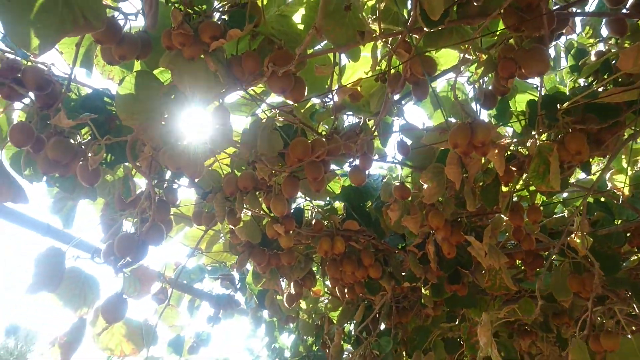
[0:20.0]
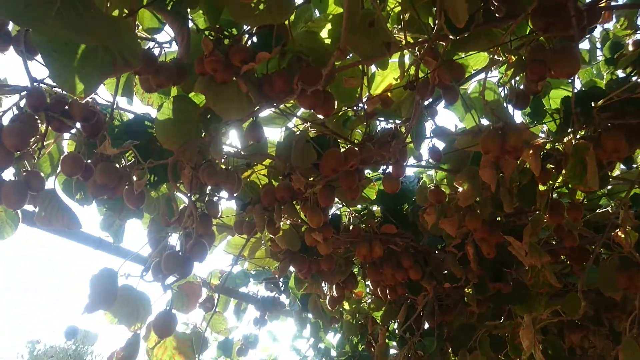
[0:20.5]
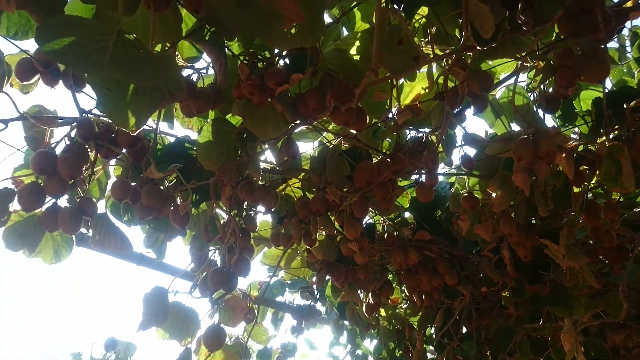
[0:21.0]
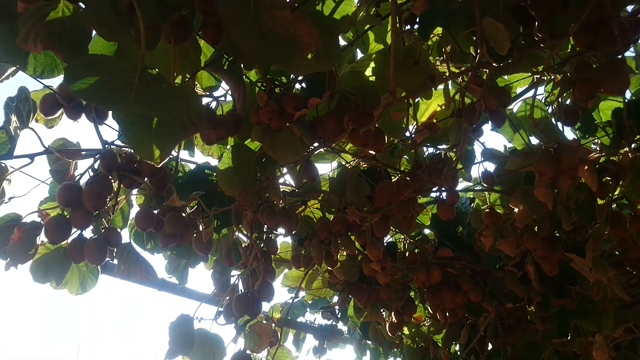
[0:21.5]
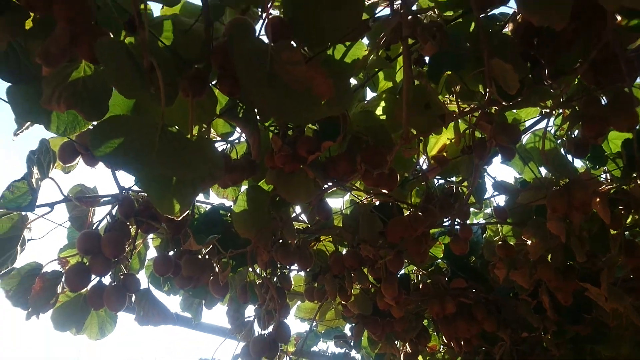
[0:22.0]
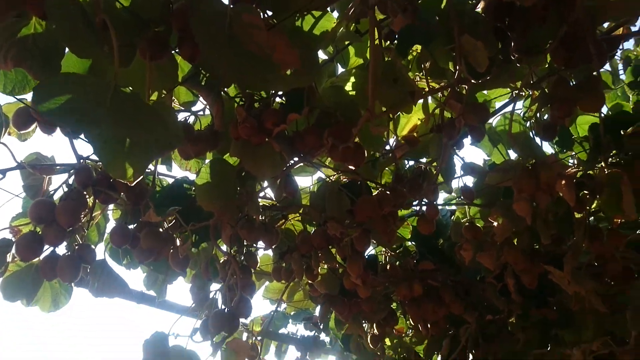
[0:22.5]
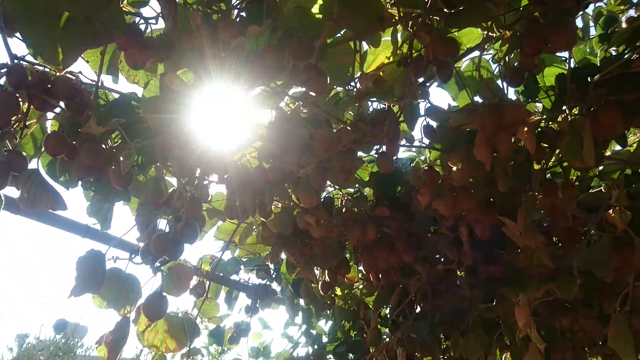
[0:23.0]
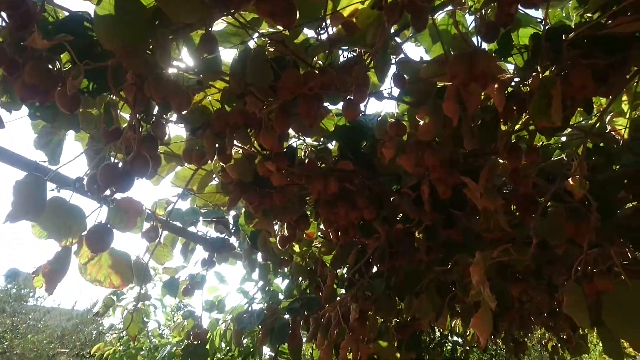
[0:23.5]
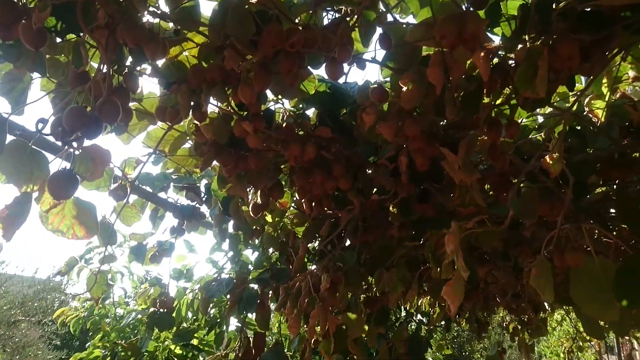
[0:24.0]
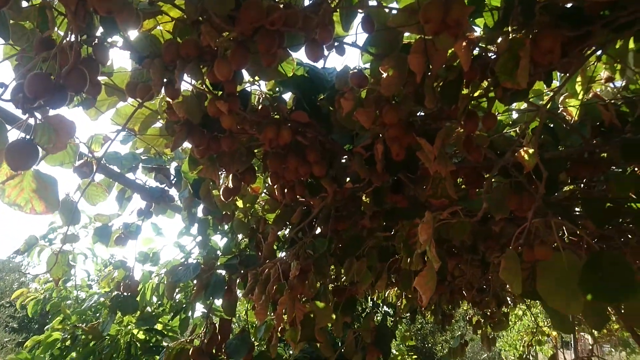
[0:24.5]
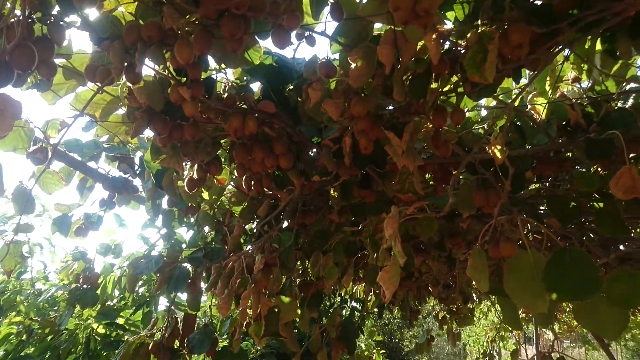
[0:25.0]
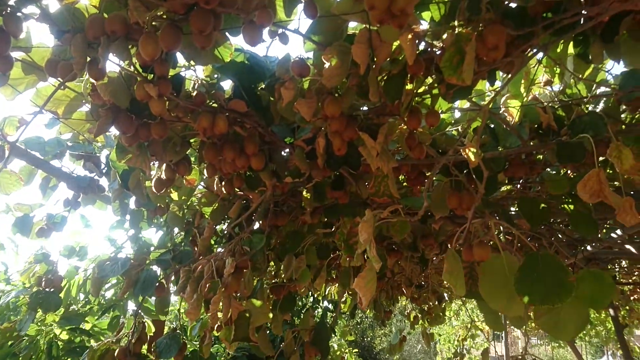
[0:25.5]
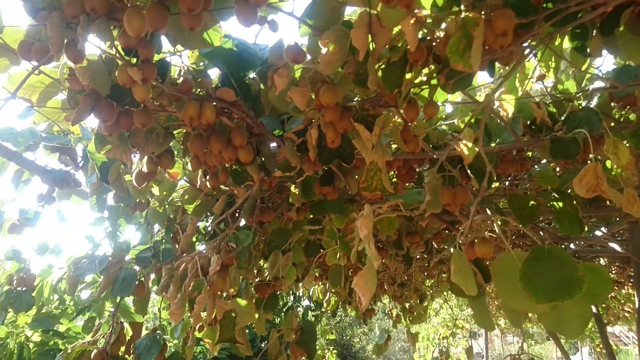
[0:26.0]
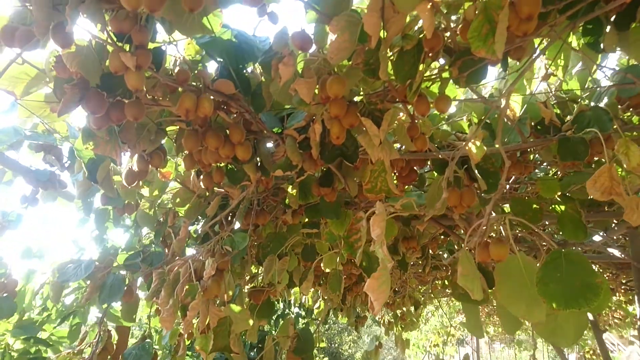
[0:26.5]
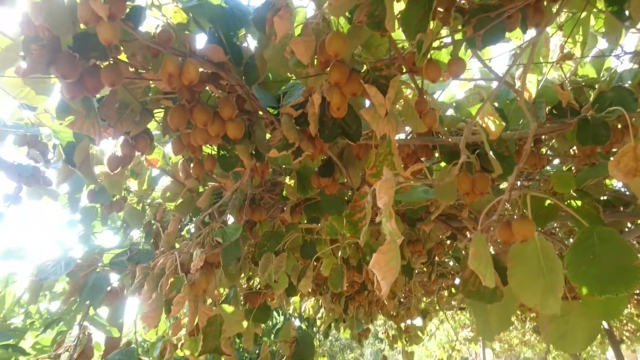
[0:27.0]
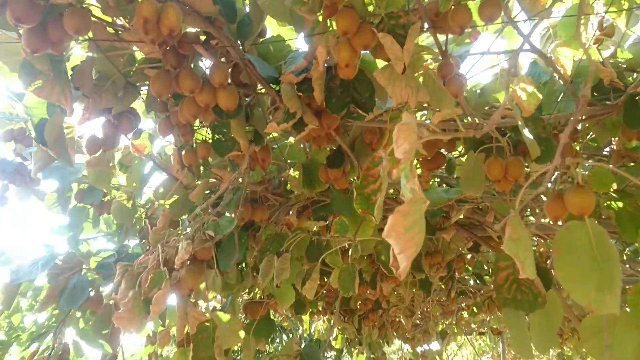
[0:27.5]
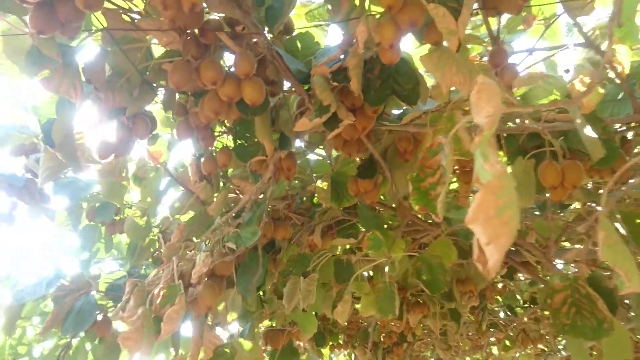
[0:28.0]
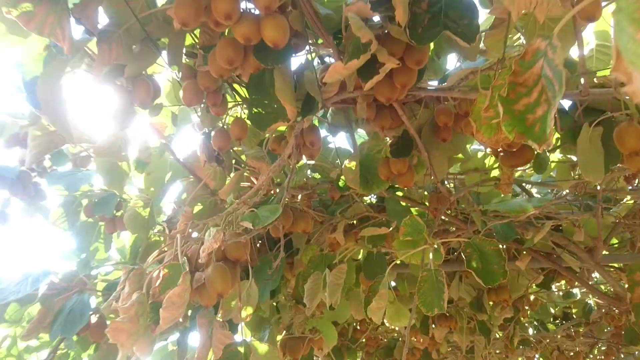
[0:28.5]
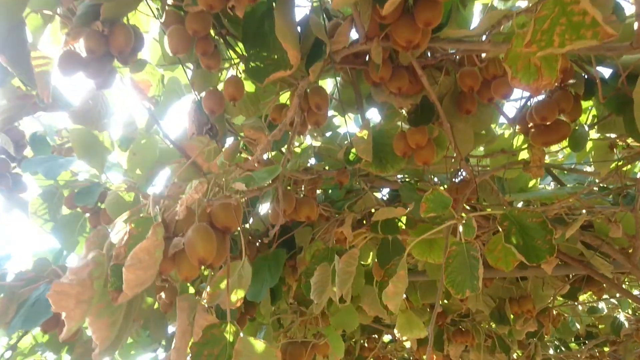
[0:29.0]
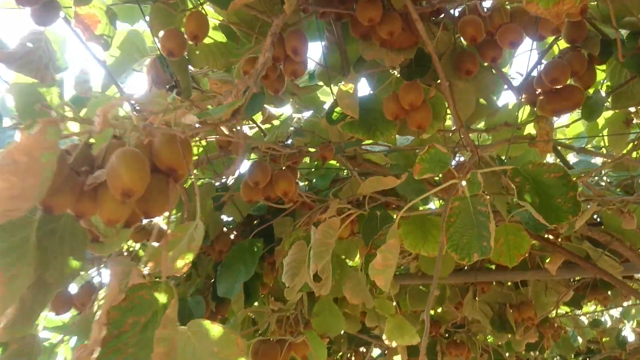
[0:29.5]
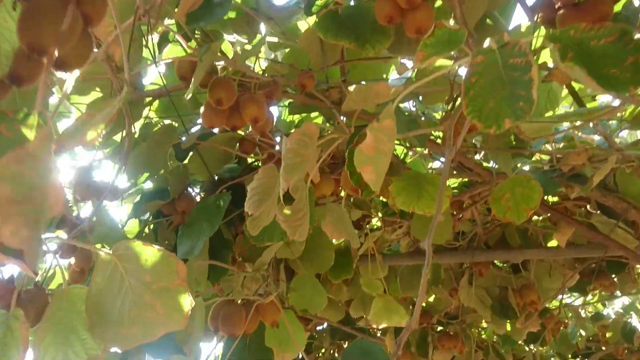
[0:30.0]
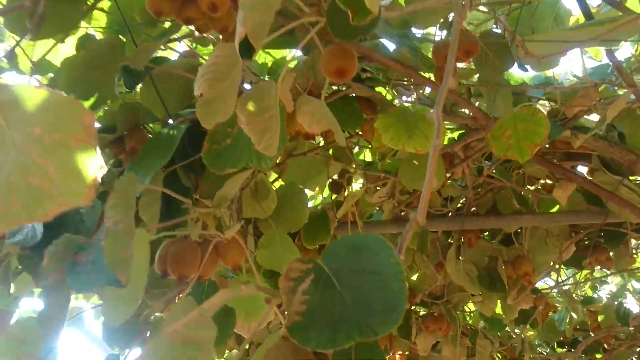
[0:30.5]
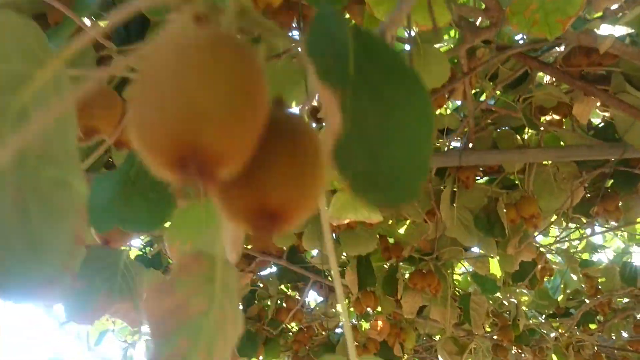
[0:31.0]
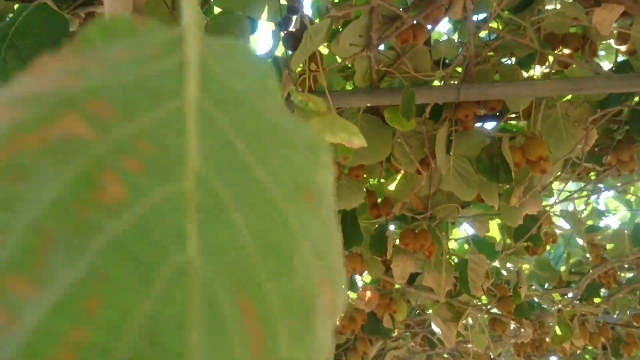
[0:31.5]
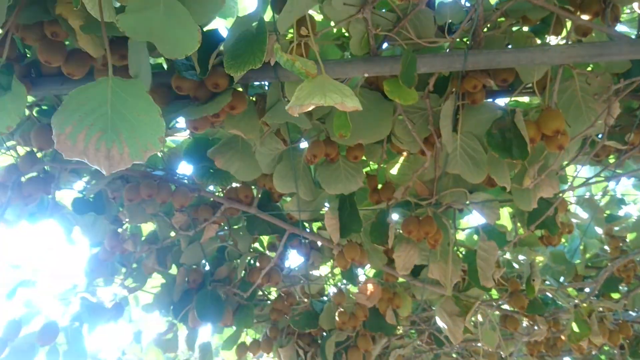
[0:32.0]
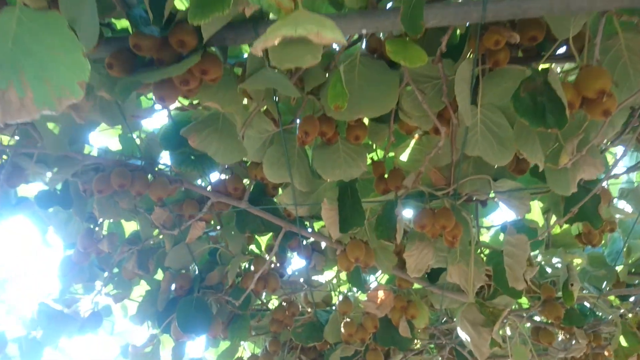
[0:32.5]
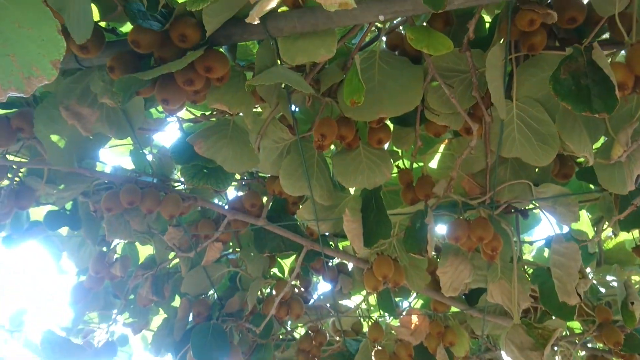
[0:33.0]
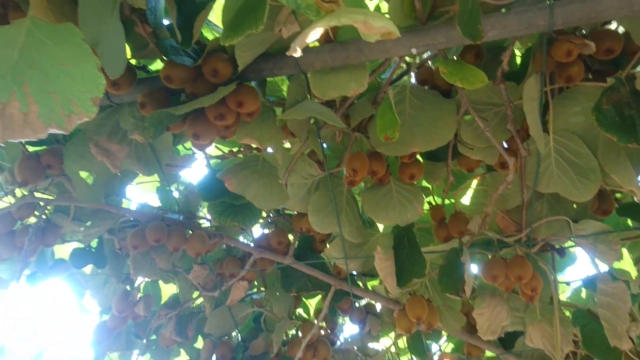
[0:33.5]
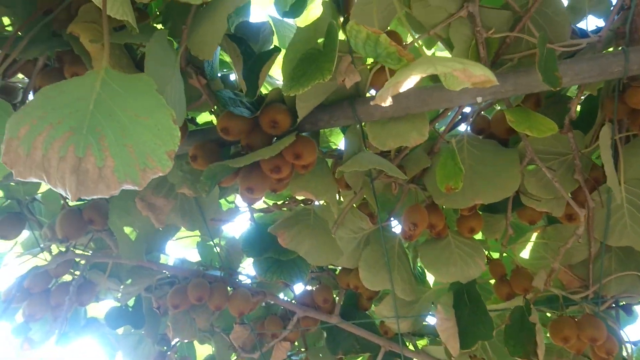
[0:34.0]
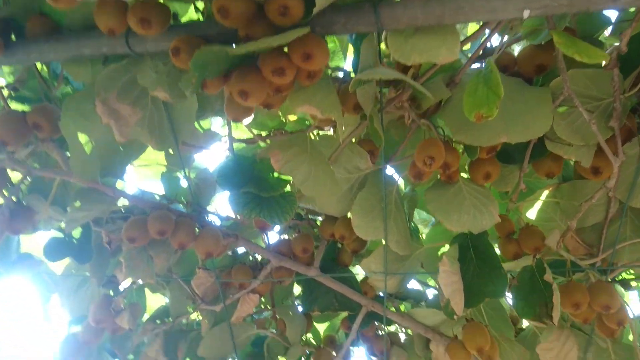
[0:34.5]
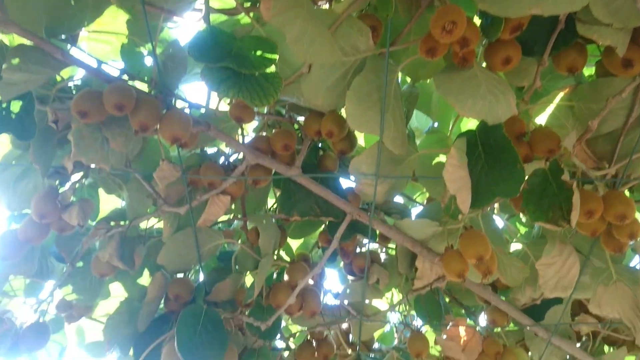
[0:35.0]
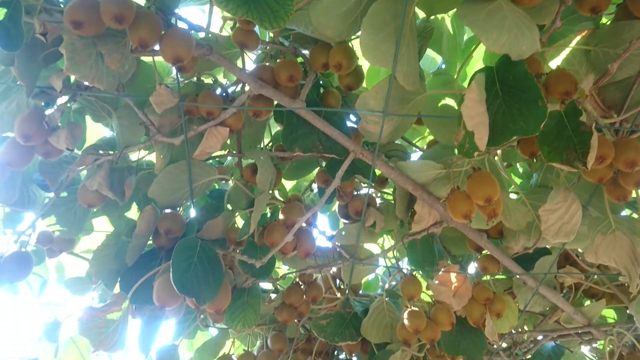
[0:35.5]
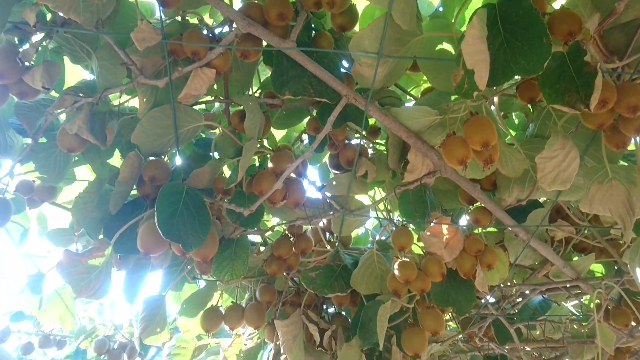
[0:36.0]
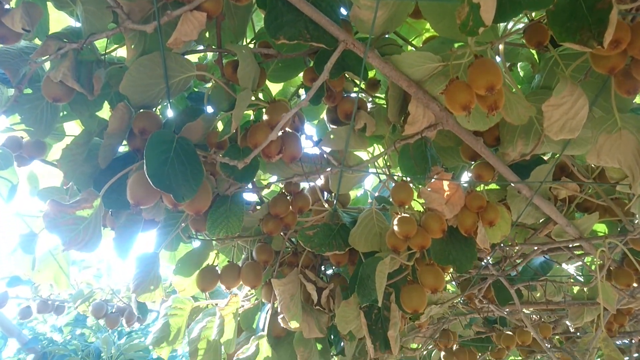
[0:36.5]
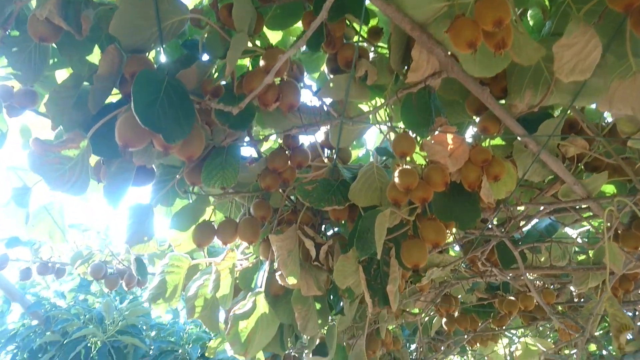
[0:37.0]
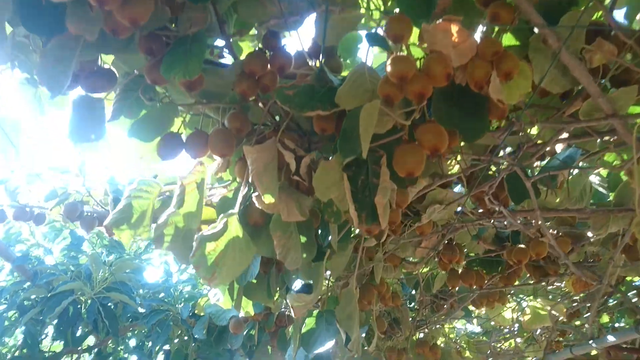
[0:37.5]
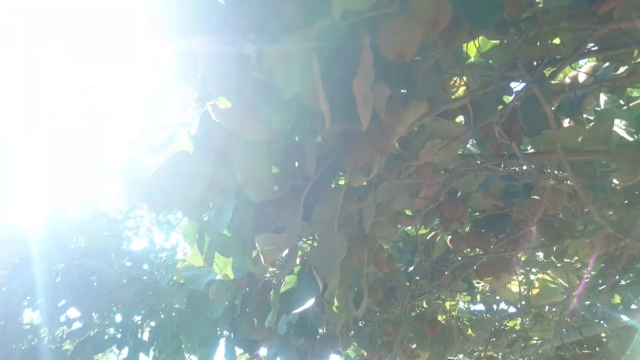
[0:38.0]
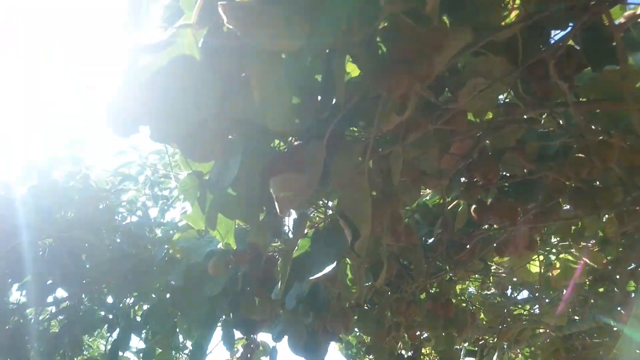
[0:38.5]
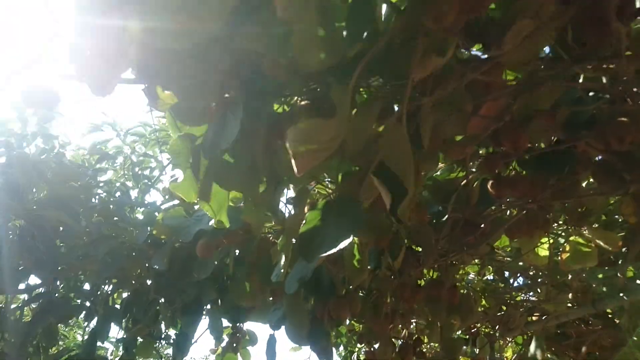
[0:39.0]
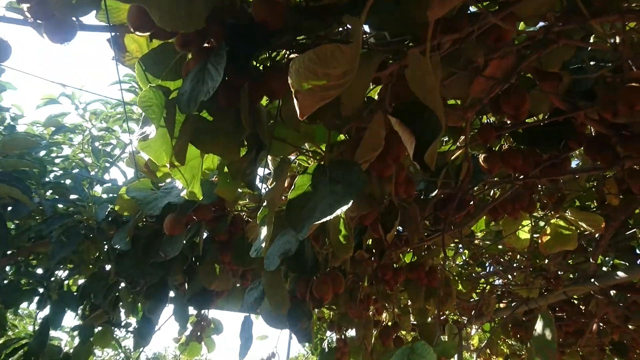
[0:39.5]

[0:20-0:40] Many hanging fruits are mixed in with green leaves, the leaves hanging along with the fruits. Some of the leaves appear very old and almost dead, with some appearing brown, but most appear green. The camera shifts downward, and the person appears to be walking forward toward an area, while the camera keeps looking upward at the dangling fruits. A support system keeps them up: dark wires set up almost in a graph-like style hold them up, blending in with the green leaves and the fruits so they are hard to notice. Between the leaves and the fruits, the blue sky is visible, with the sun shining very bright toward the left side. The same fruits hang downward; they appear to be apricots and are light brown.